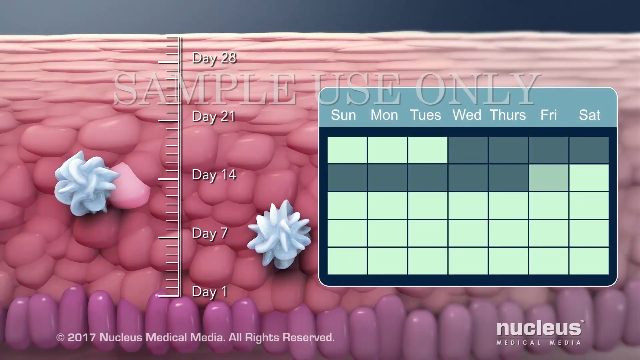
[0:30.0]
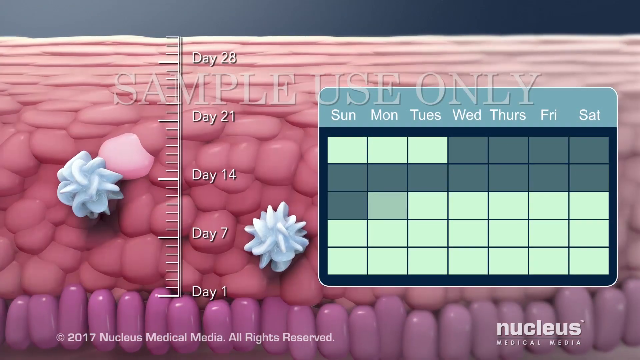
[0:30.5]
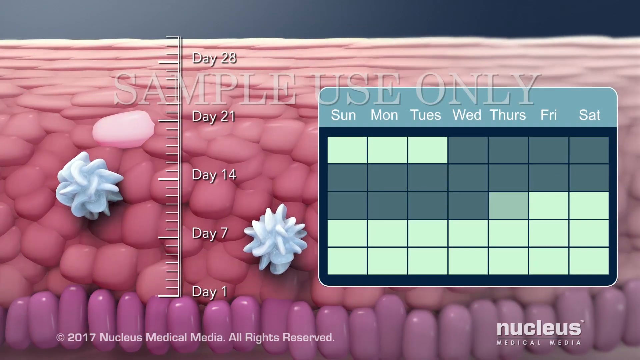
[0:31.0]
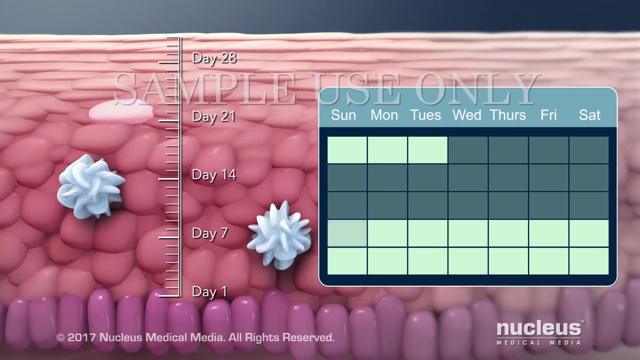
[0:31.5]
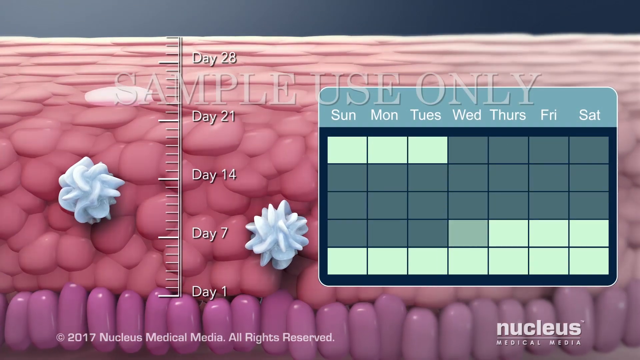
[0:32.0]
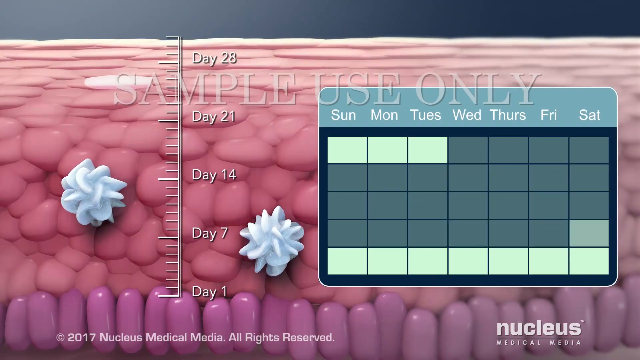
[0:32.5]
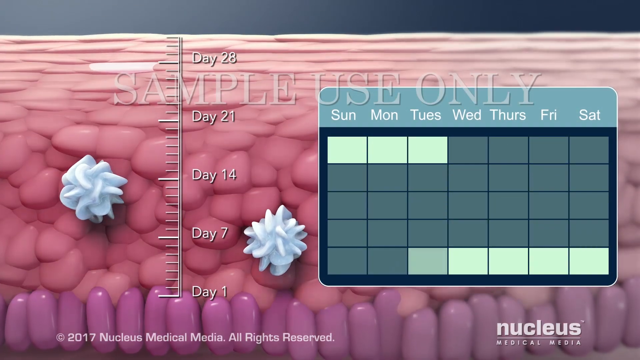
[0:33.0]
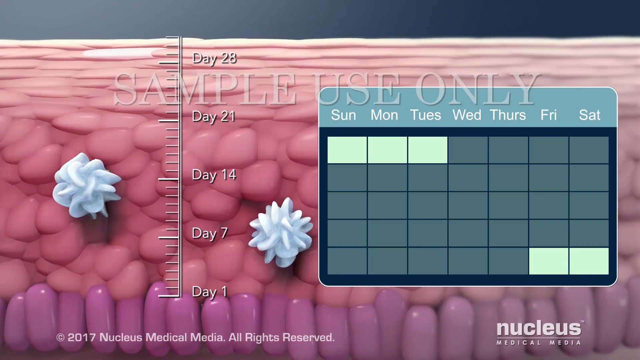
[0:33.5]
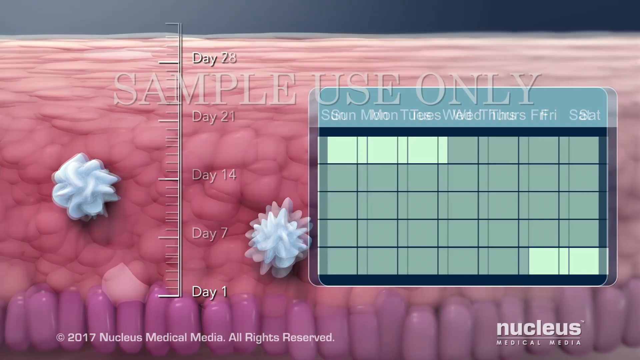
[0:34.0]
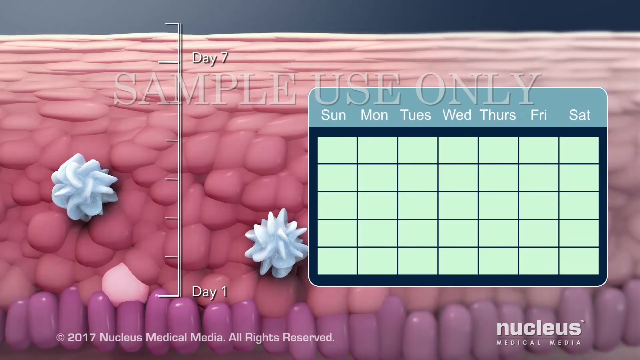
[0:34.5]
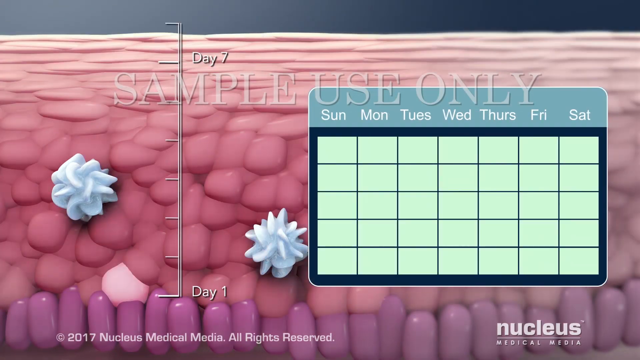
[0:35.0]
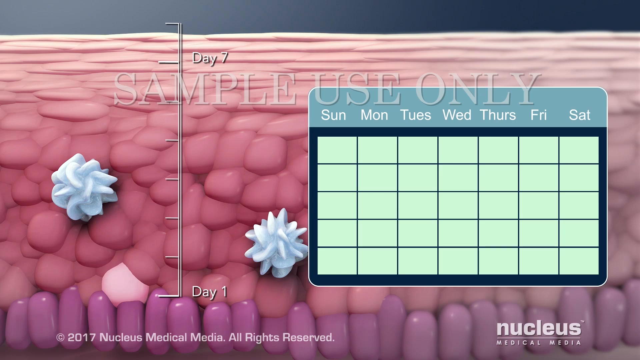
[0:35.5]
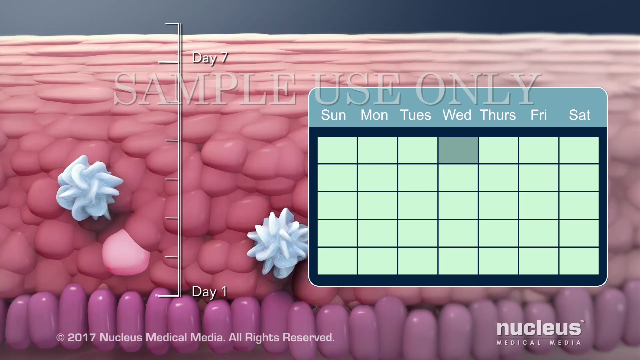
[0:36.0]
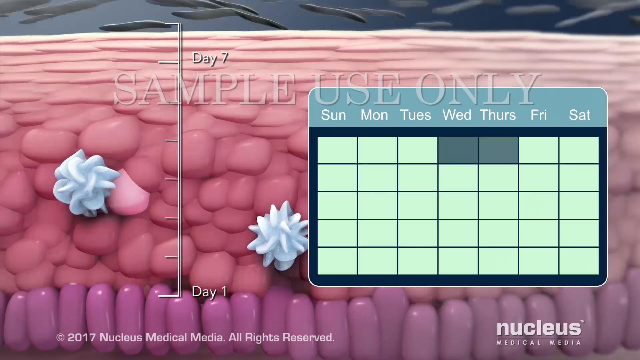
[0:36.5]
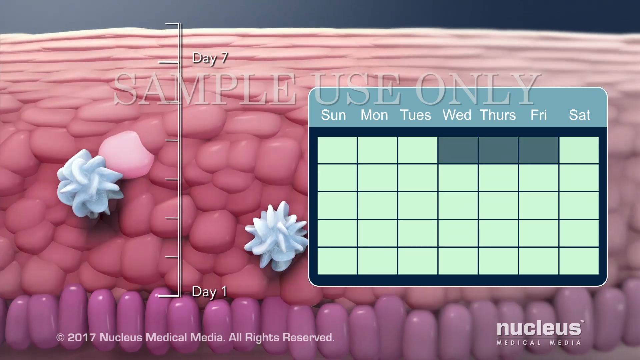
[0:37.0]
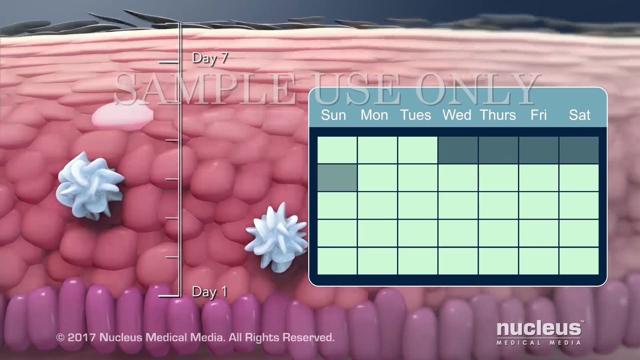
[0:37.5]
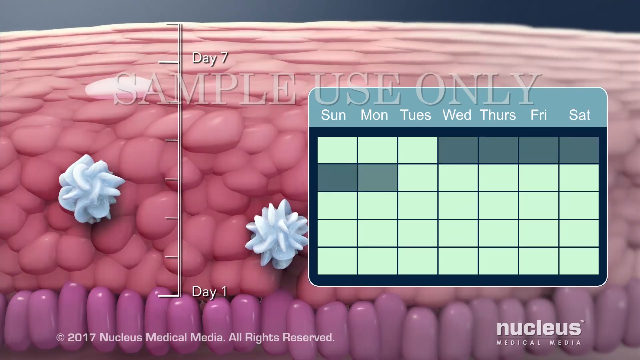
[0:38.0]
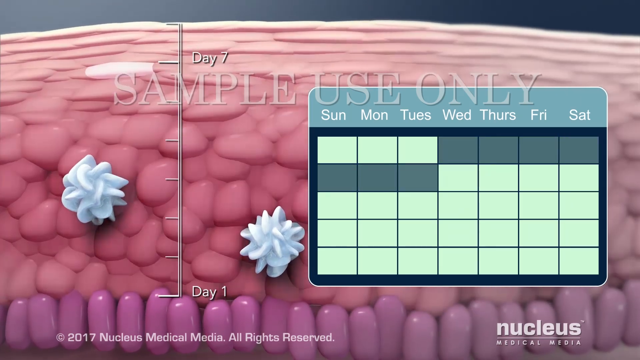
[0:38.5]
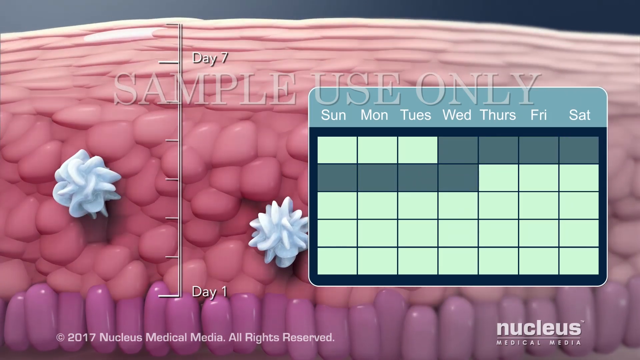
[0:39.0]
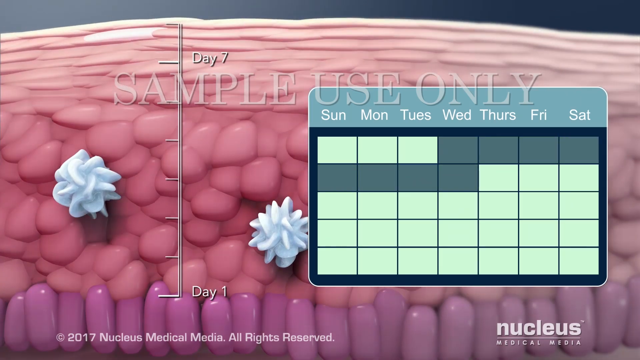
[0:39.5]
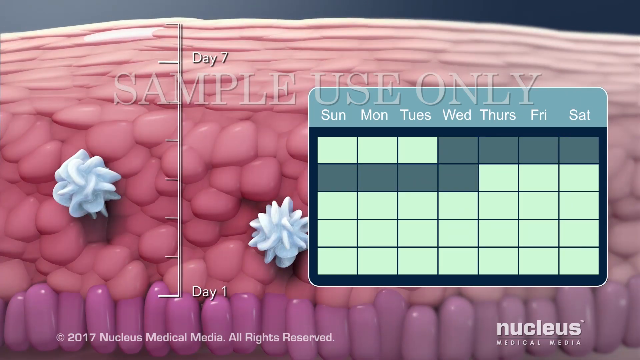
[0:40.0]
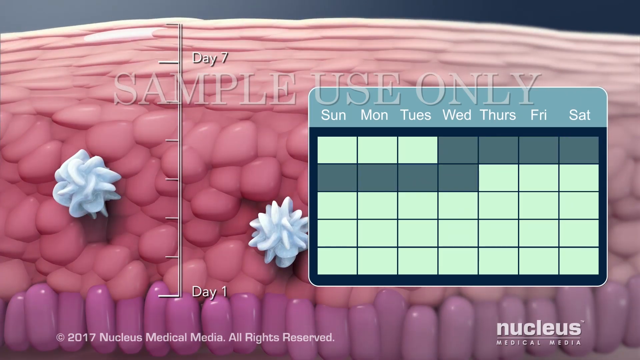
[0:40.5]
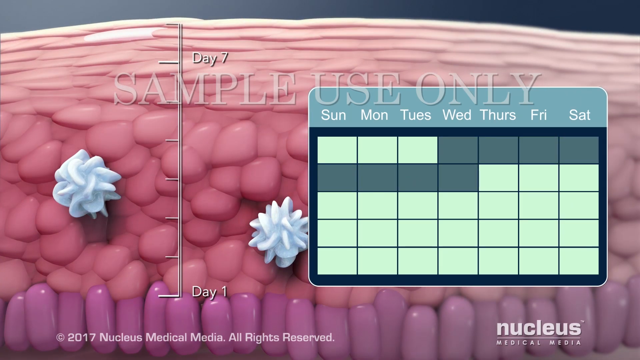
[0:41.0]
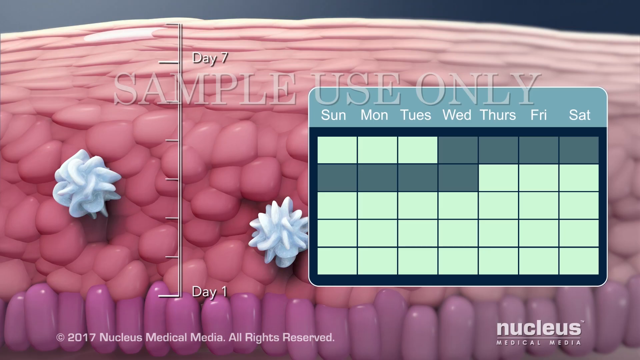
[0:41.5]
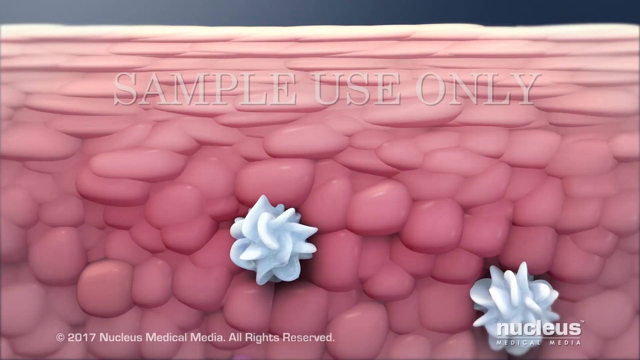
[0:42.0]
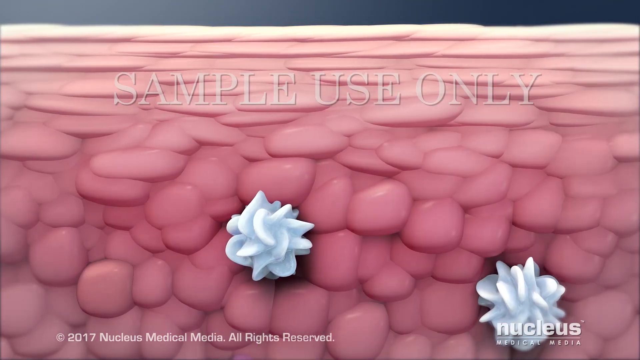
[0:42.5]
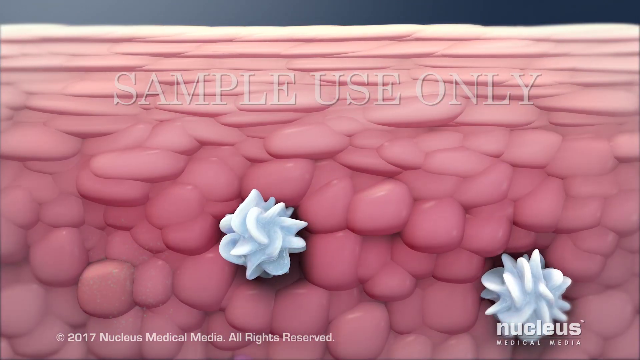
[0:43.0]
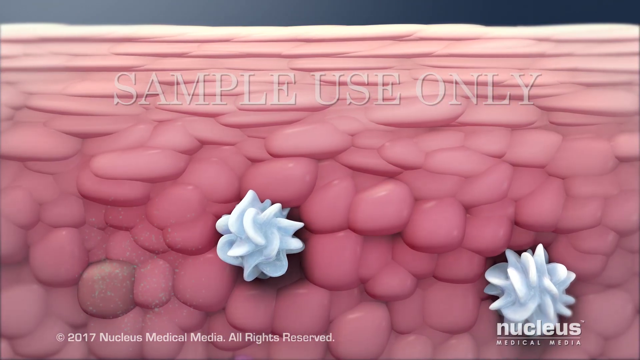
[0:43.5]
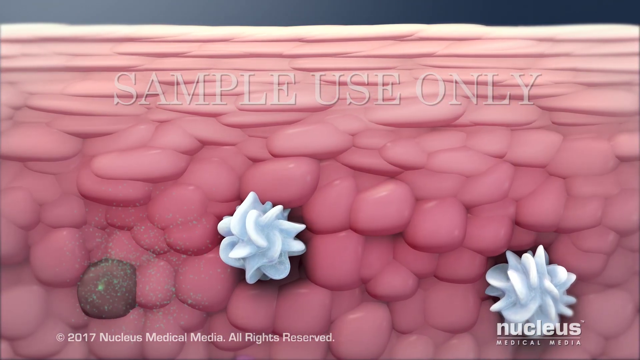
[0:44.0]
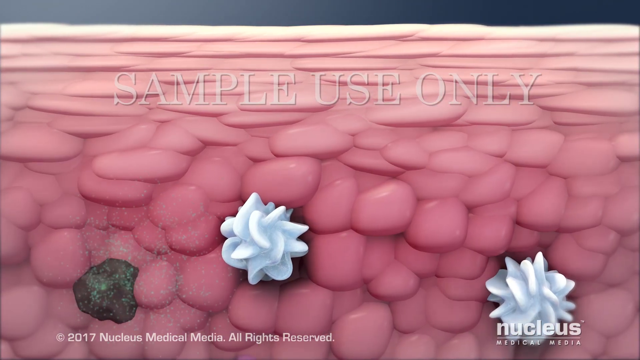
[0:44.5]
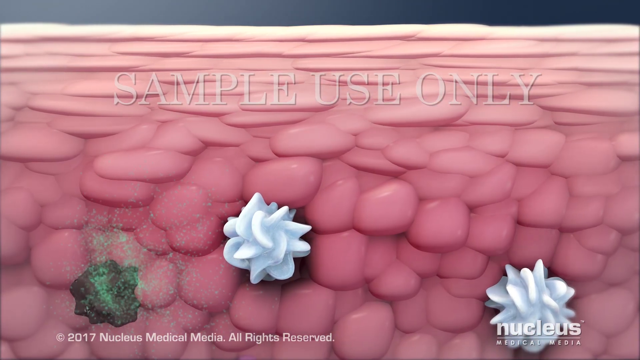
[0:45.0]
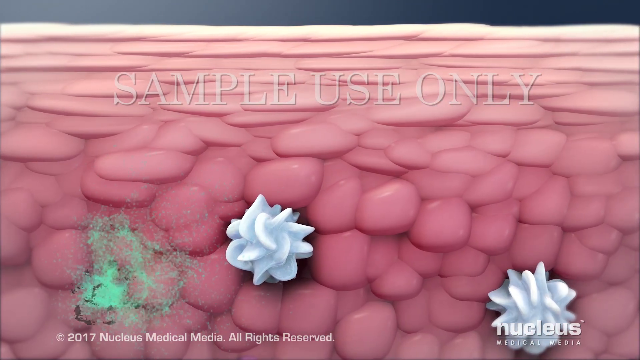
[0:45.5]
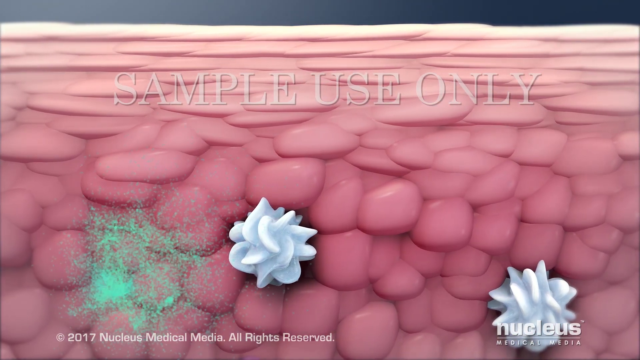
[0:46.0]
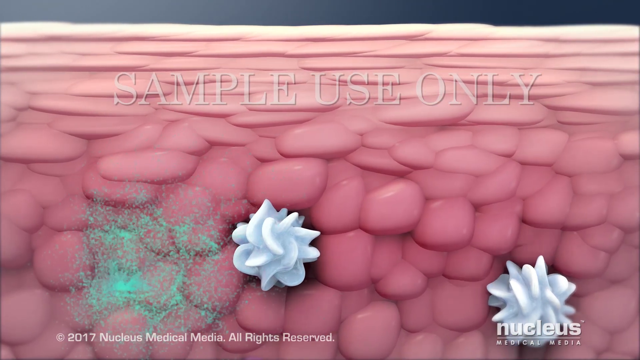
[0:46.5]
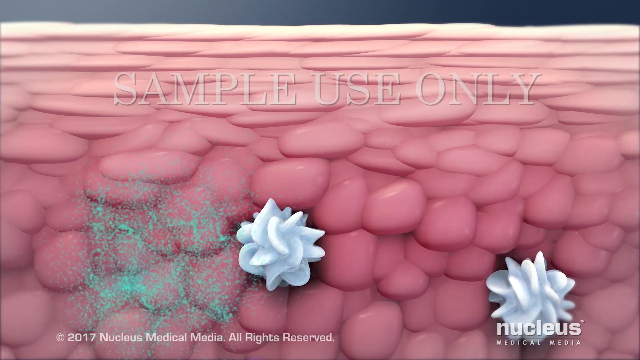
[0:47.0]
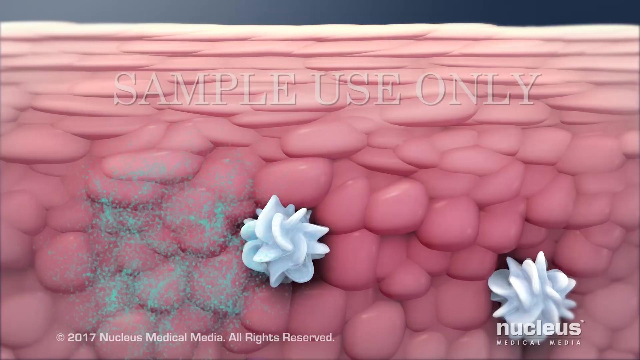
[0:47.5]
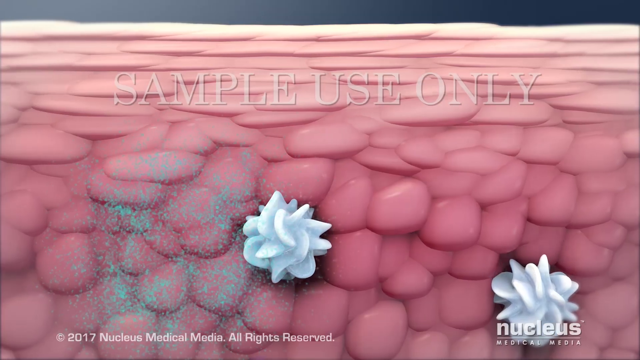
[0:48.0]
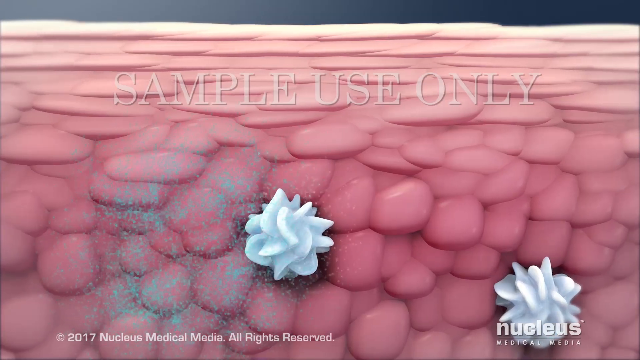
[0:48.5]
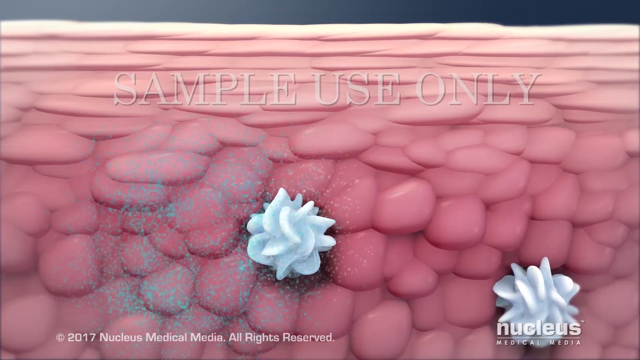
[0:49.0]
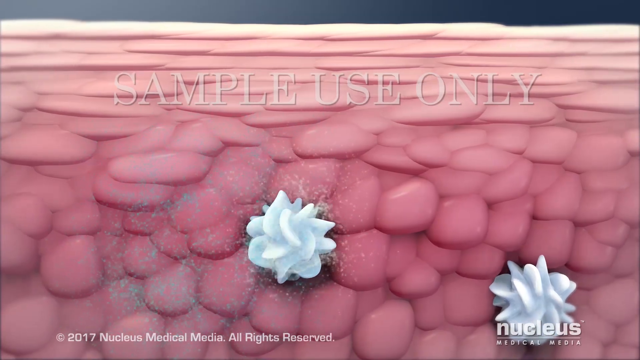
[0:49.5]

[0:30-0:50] The animation shows a day 1 to day 28 cycle, apparently of the infection. What looks like bacteria or something similar stacks over itself, and other things inside the skin seem to spread the infection, appearing to bubble up to the surface of the skin. It then moves to day one through day seven, showing how it seems to multiply or spread through the skin. At the very last second, something about a cell forming appears. The video appears to show the entire cycle as 28 days and then break it down week by week, ending on days 1-7.